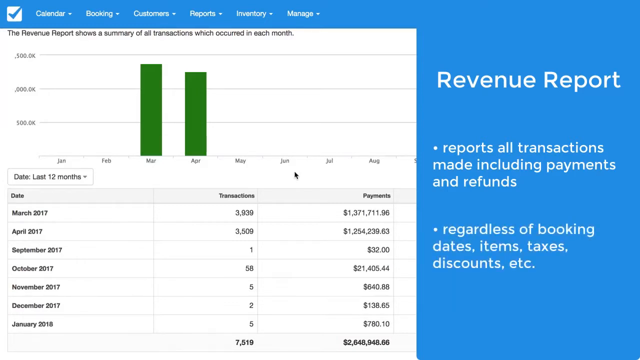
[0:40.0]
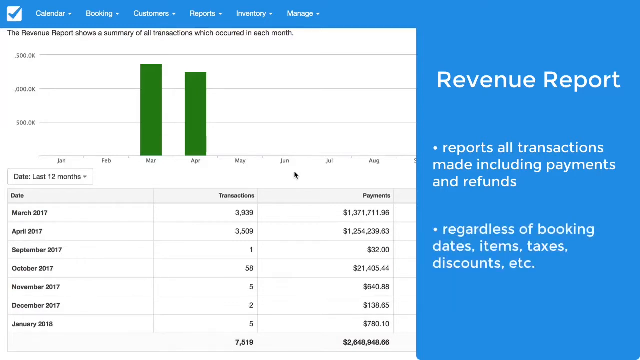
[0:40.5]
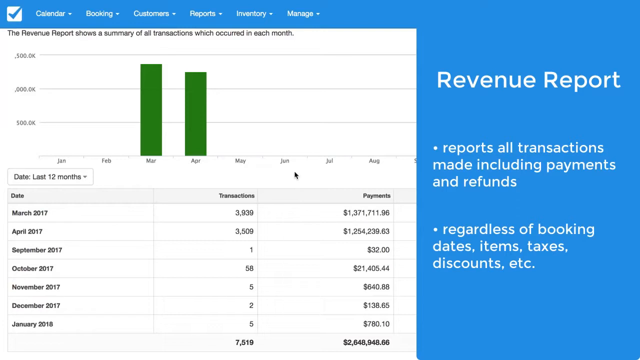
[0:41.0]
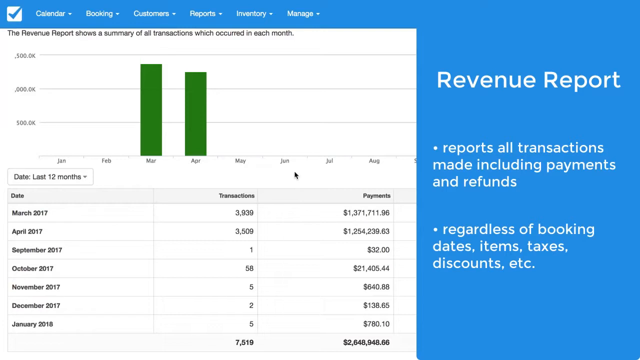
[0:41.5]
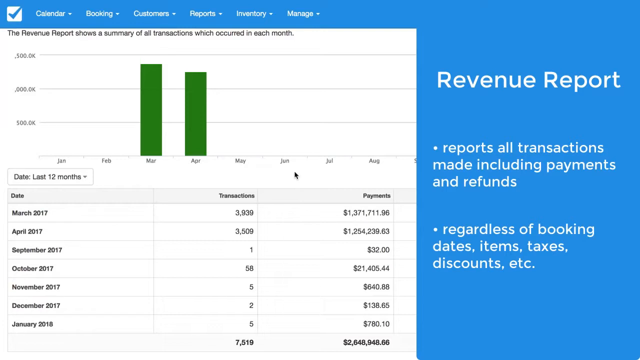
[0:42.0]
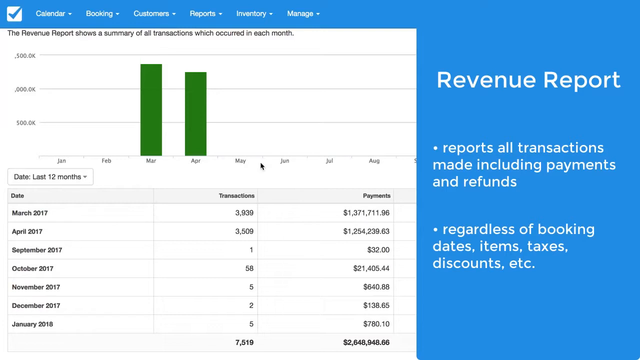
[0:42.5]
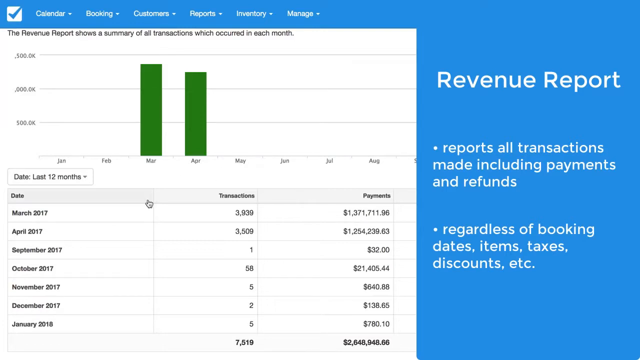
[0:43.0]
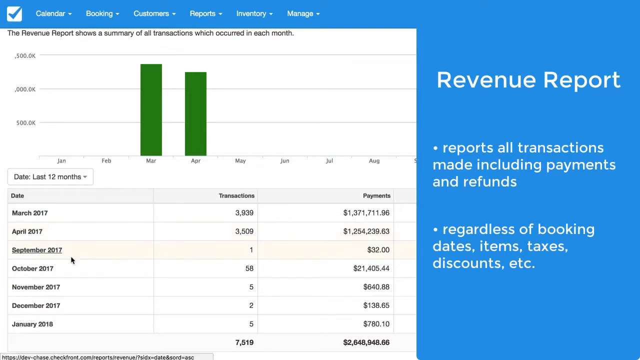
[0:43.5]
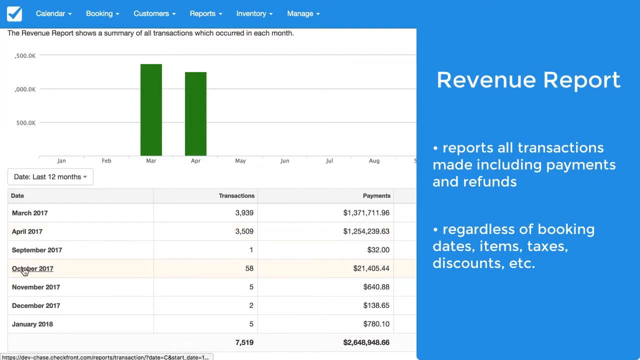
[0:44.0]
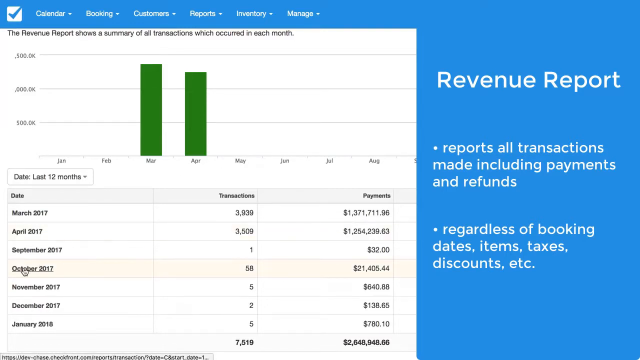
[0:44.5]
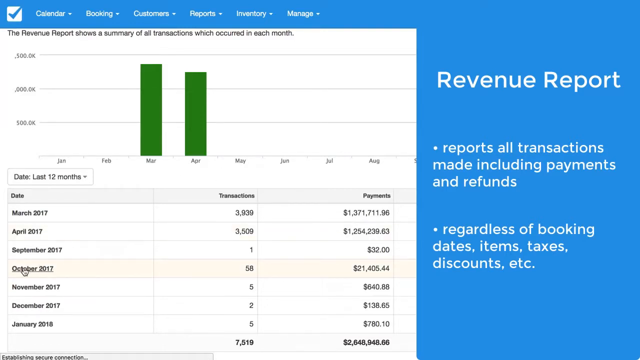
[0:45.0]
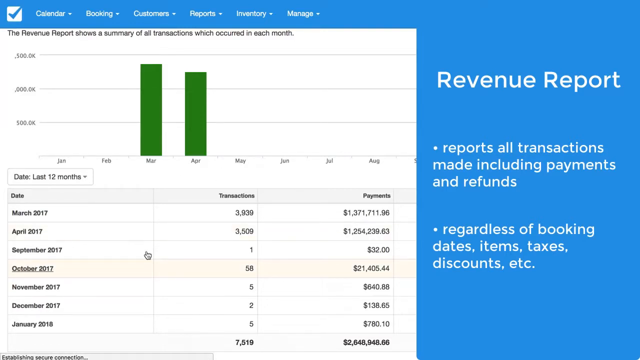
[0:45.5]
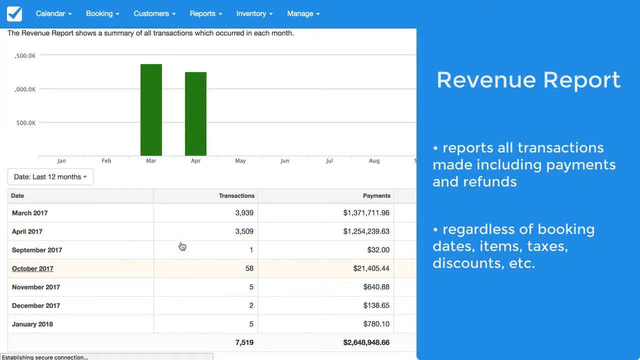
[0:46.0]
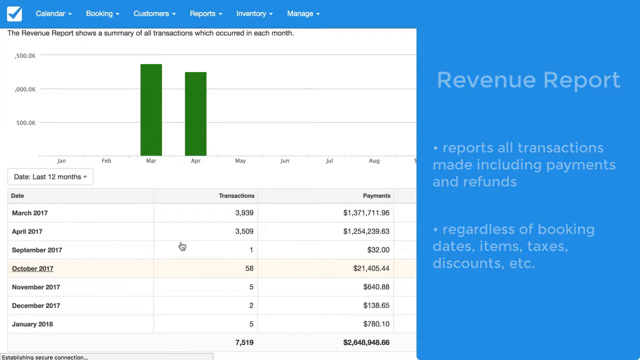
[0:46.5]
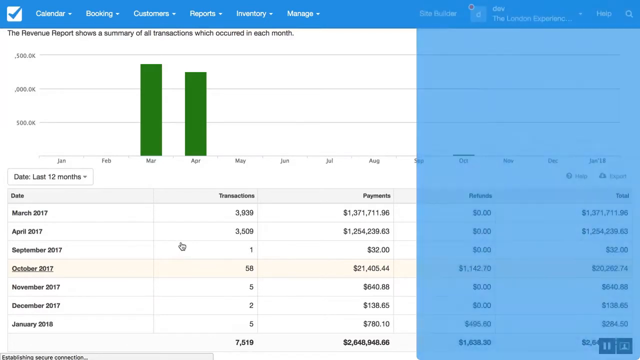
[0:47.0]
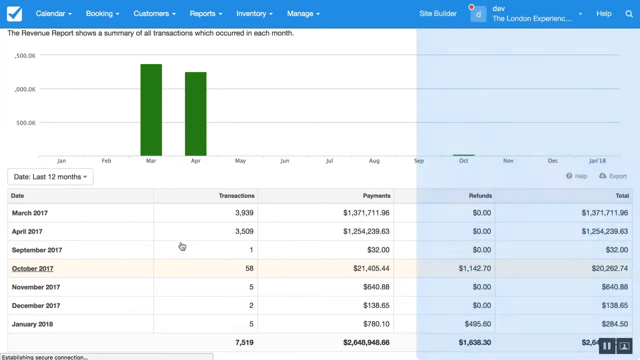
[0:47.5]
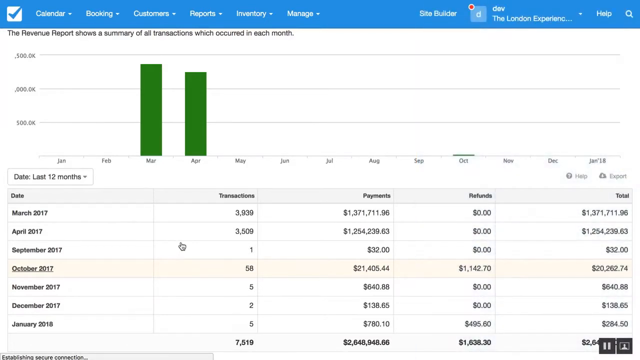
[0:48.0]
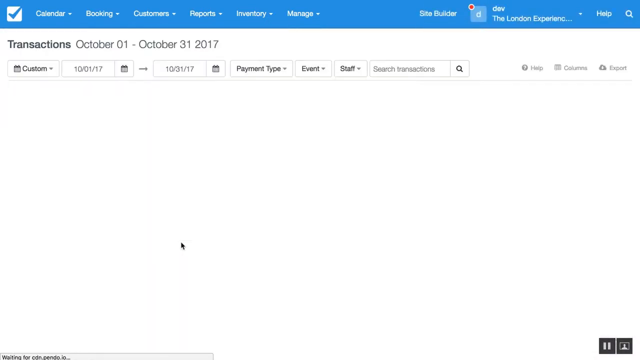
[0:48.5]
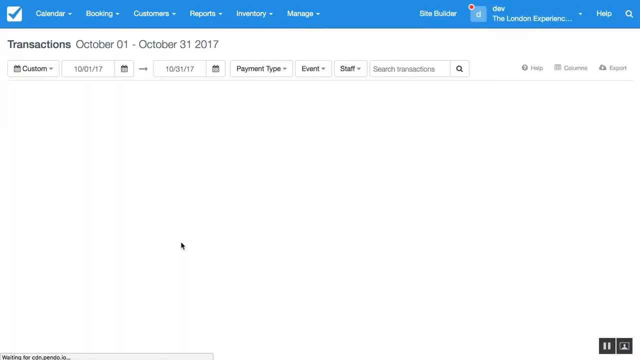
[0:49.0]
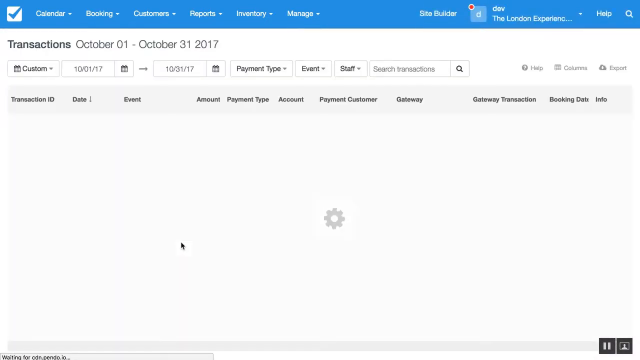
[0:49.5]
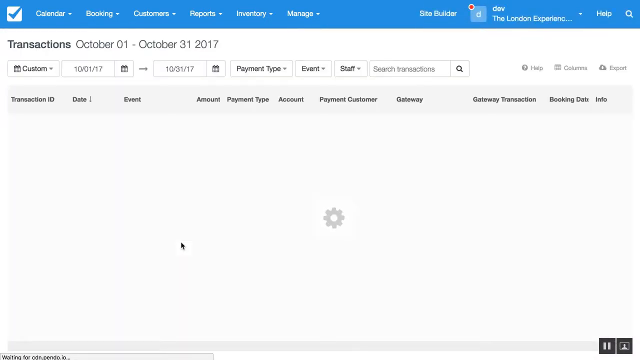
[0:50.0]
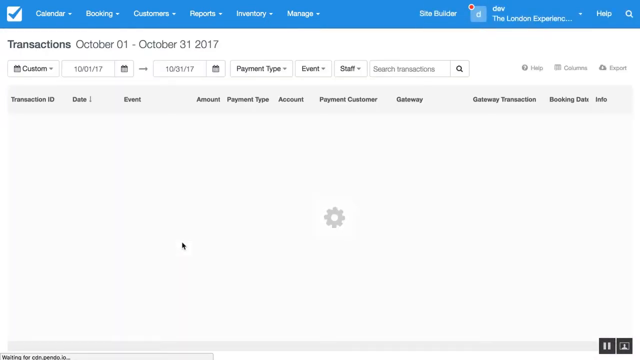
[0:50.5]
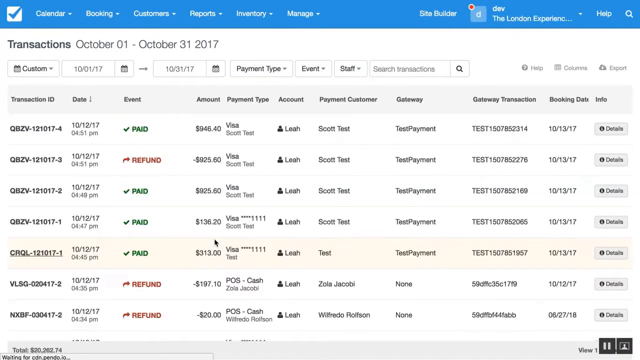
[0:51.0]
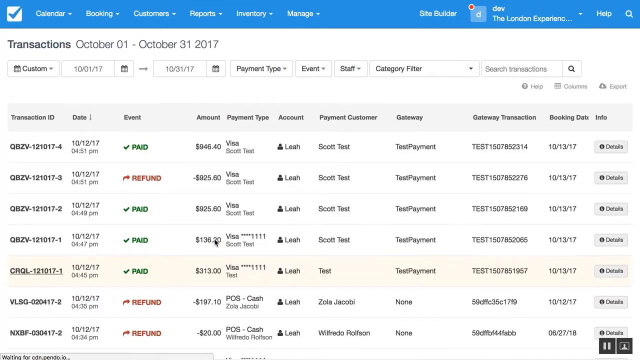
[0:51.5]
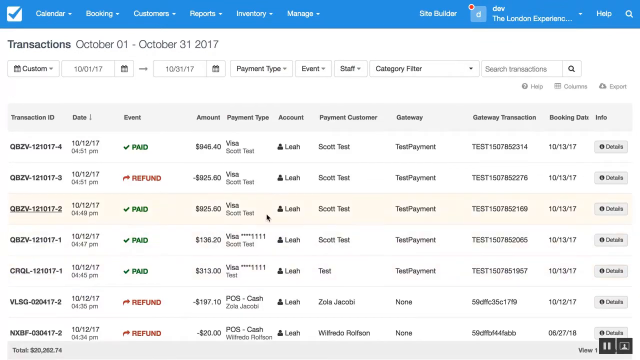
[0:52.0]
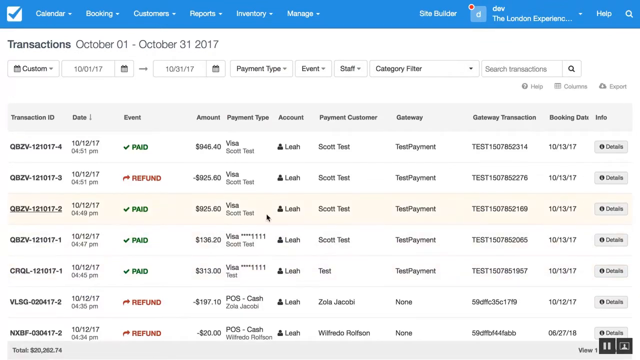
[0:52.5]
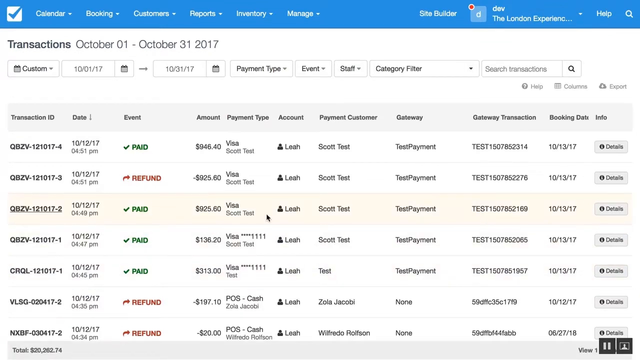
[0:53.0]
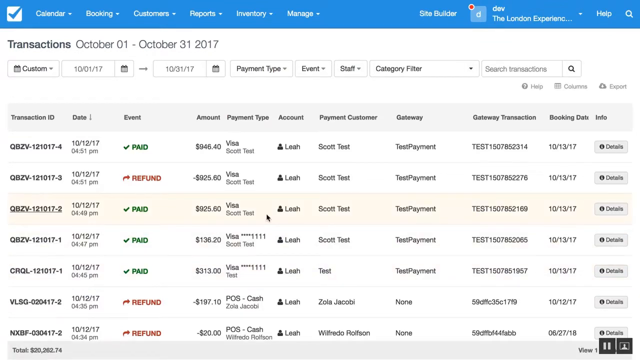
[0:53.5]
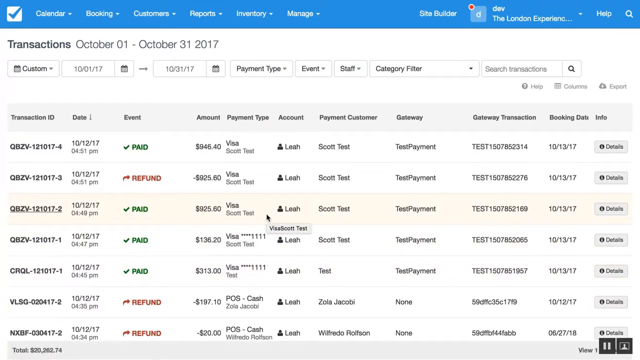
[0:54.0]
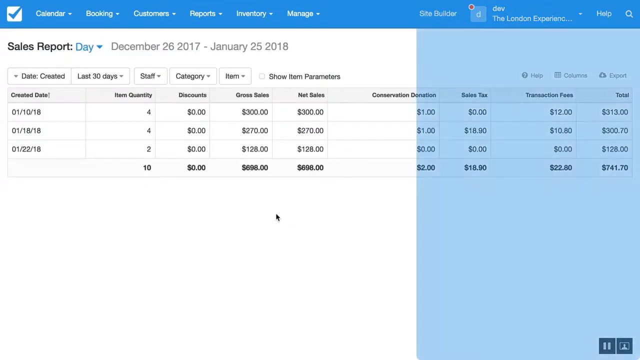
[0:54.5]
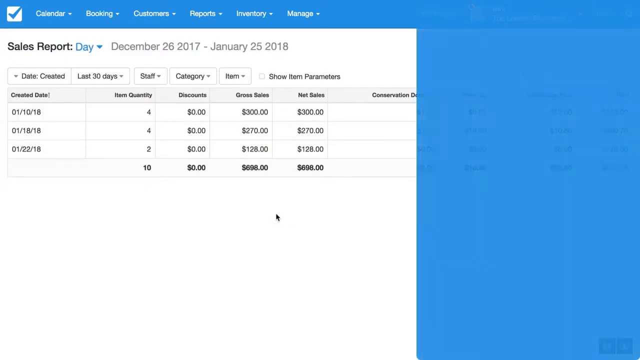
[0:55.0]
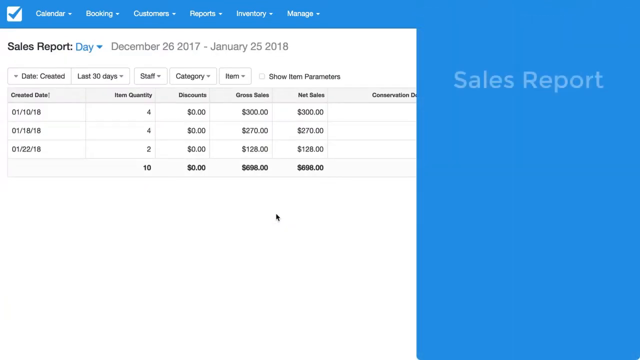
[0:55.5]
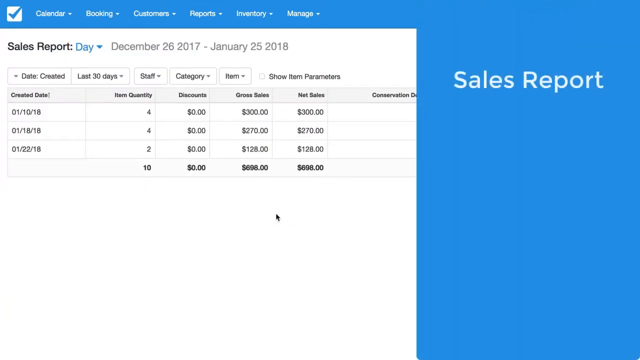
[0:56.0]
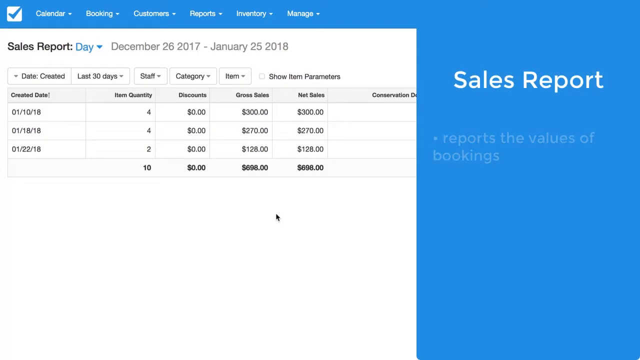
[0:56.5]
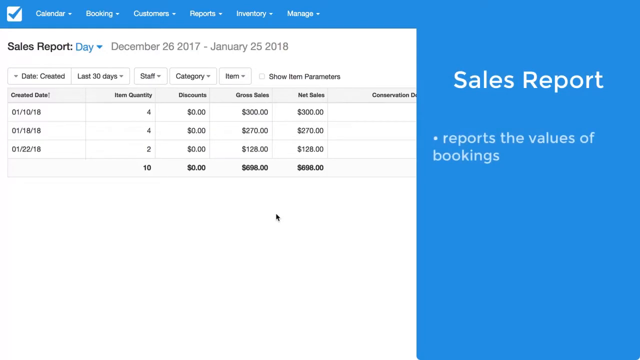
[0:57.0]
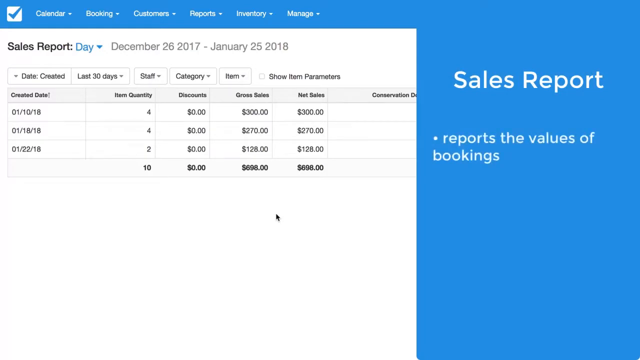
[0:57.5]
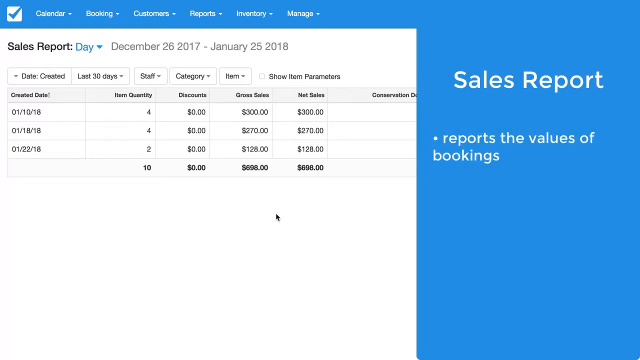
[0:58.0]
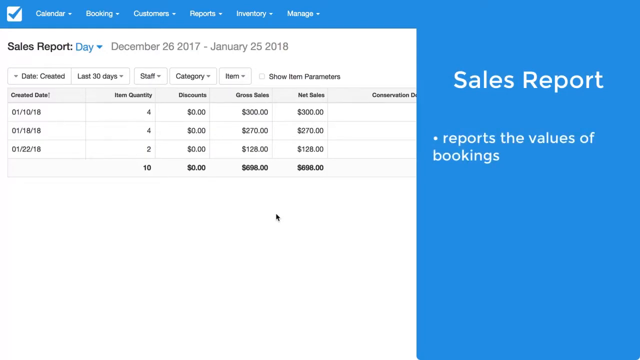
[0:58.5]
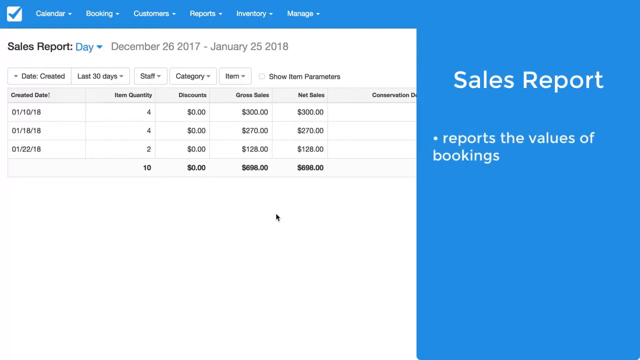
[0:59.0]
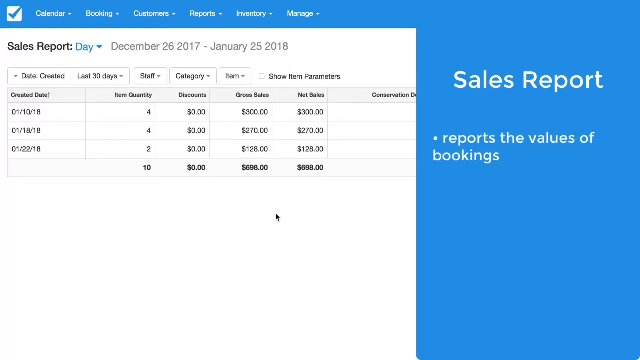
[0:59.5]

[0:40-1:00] The mouse pointer moves to the left side over October 2017, and the user clicks that selection. The page loads, showing a big list of numerous transactions between October 1st and October 31st, 2017. From the left, the columns show the transaction IDs, the dates, the event (whether paid or refund), the amount of each transaction, the payment type, the account who made the transaction, the payment customer the payment went to, the gateway information, the gateway transaction, the booking data, and finally a column called info with buttons that all say "details." More information then appears on the right side: a title that says "sales report," and underneath it a bullet point reading "reports the values of bookings."